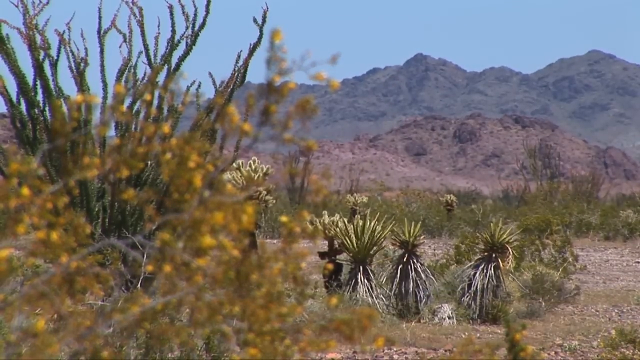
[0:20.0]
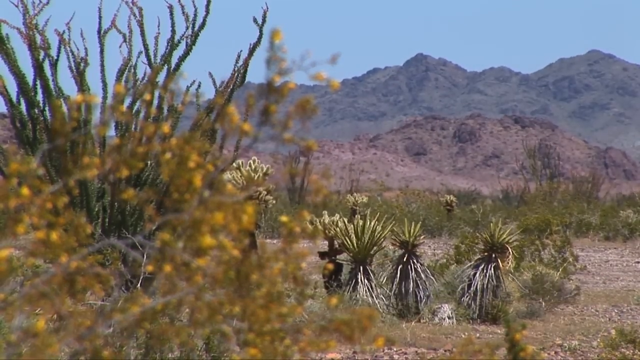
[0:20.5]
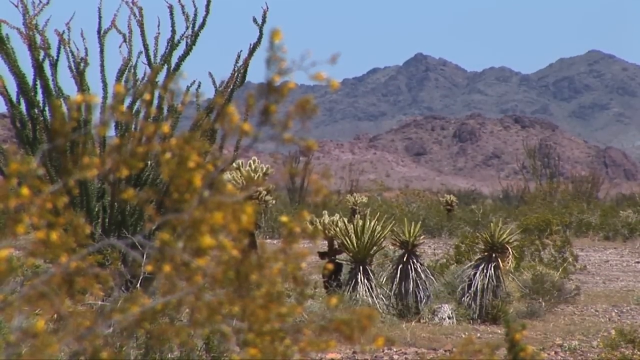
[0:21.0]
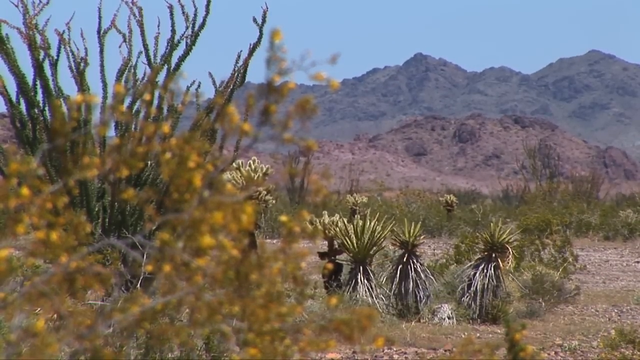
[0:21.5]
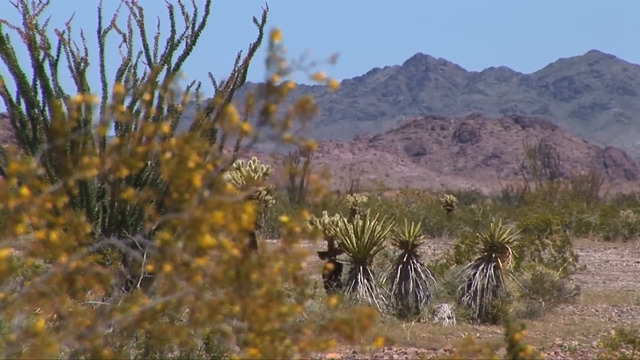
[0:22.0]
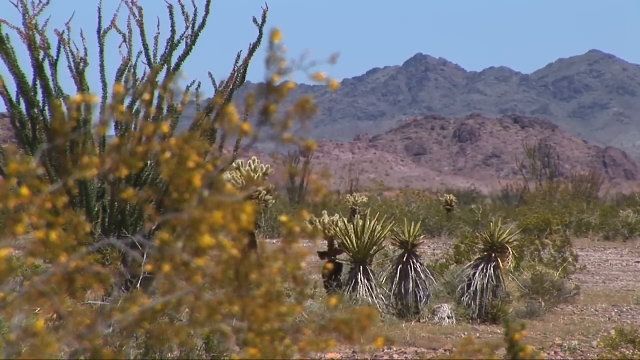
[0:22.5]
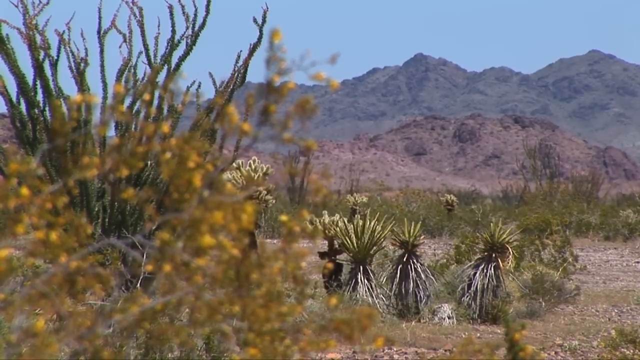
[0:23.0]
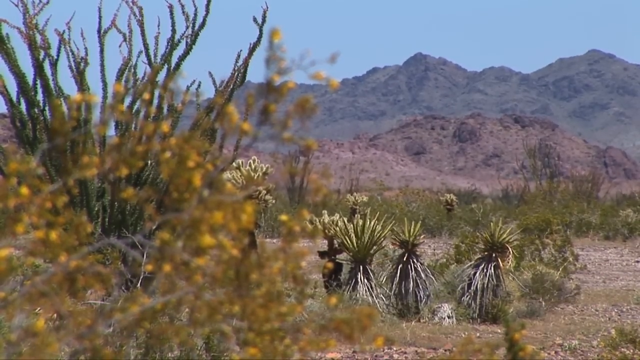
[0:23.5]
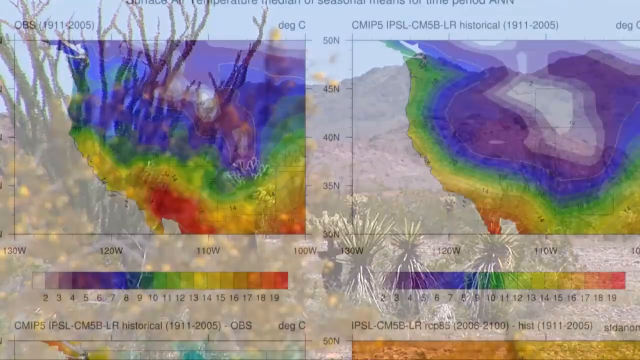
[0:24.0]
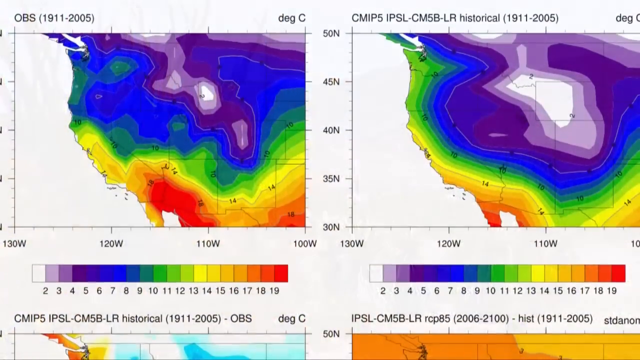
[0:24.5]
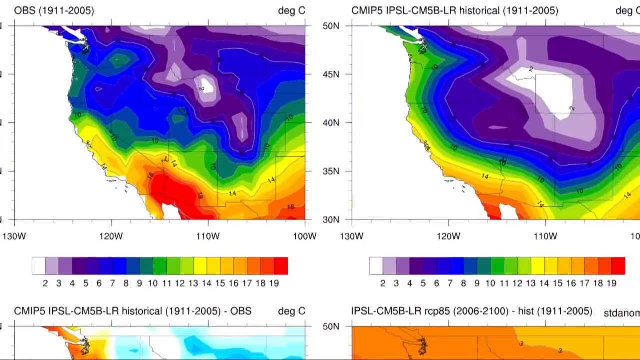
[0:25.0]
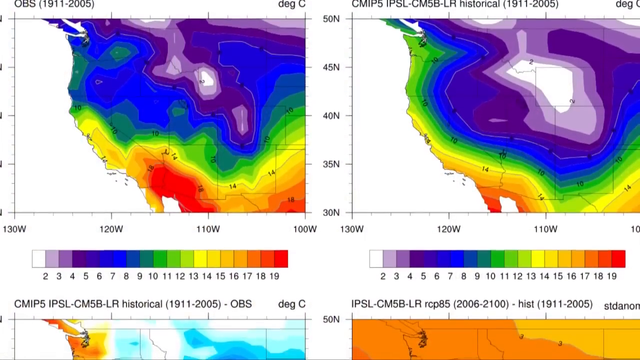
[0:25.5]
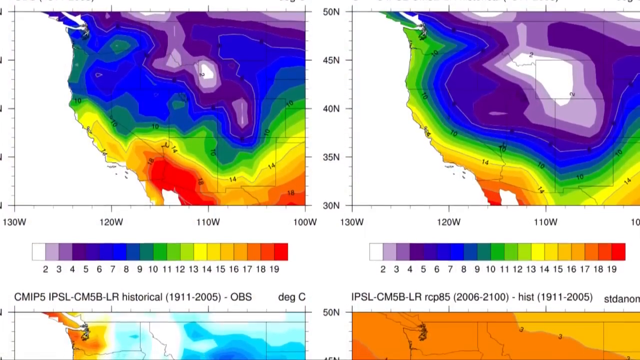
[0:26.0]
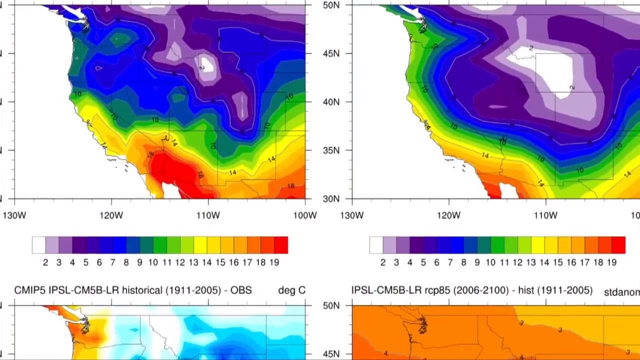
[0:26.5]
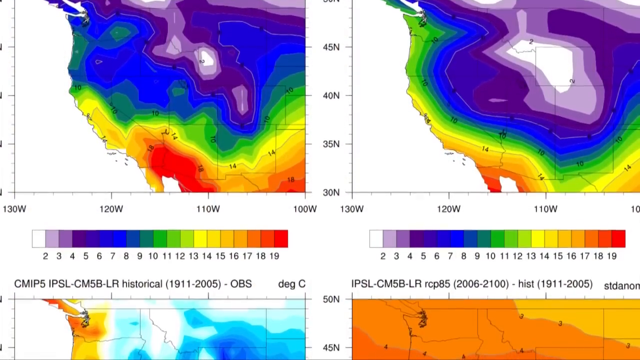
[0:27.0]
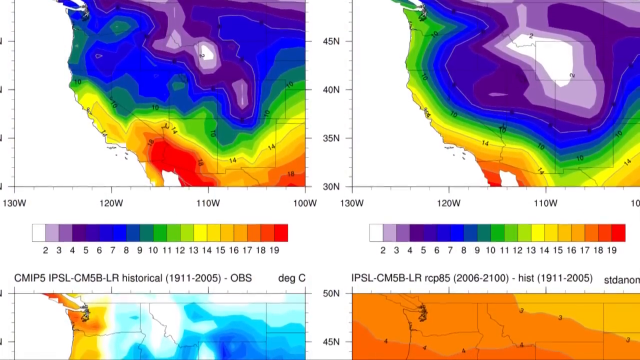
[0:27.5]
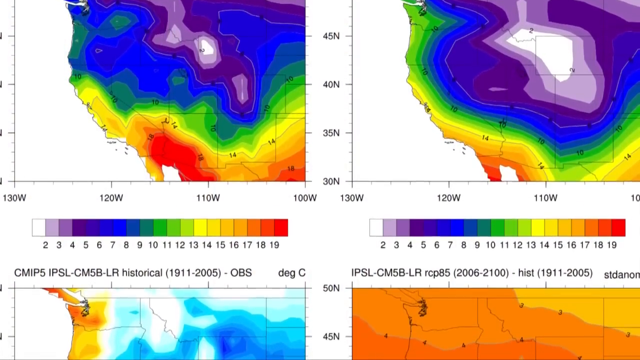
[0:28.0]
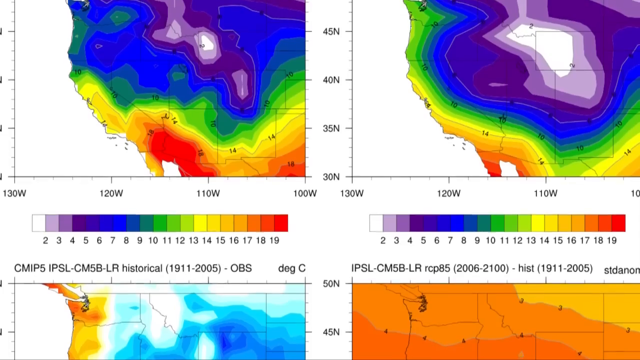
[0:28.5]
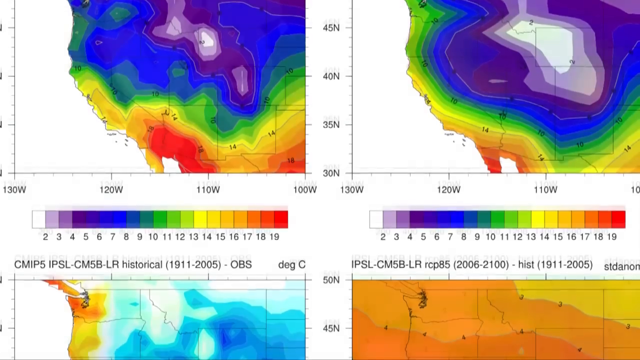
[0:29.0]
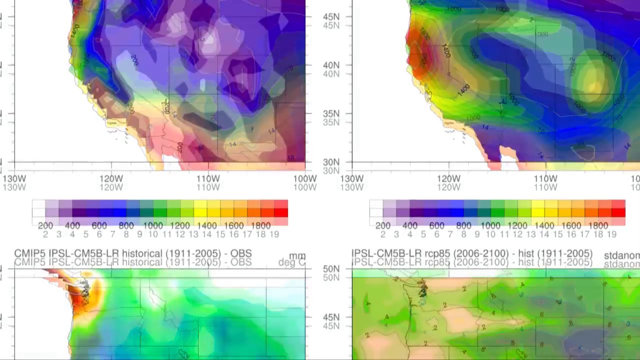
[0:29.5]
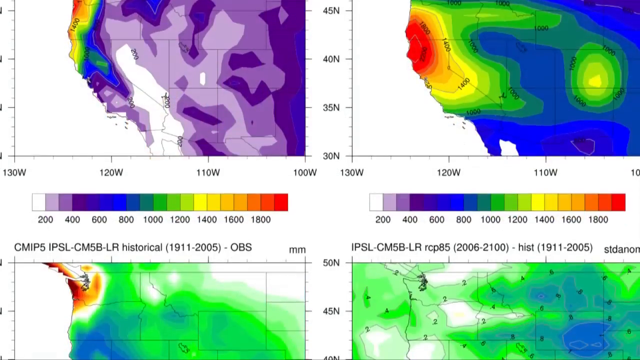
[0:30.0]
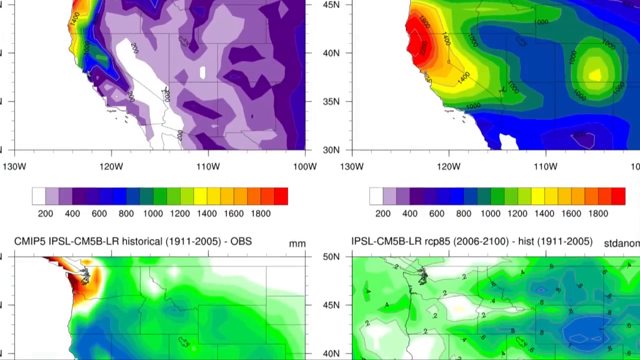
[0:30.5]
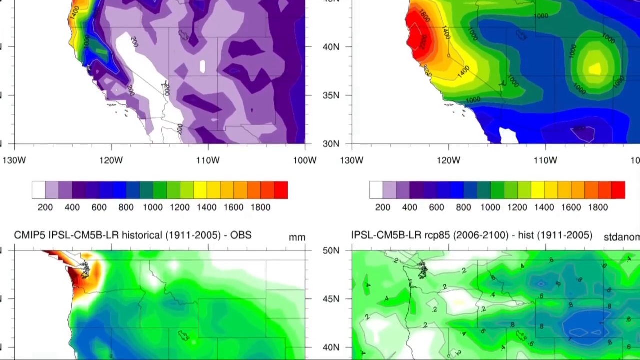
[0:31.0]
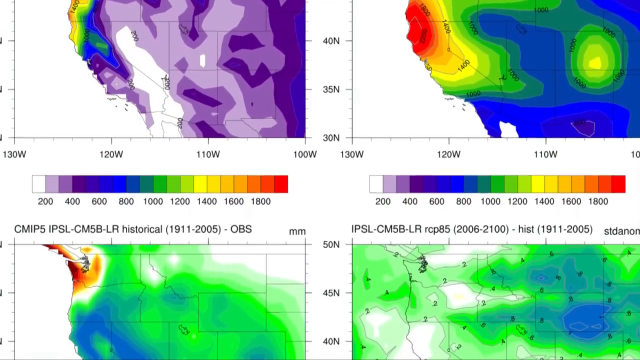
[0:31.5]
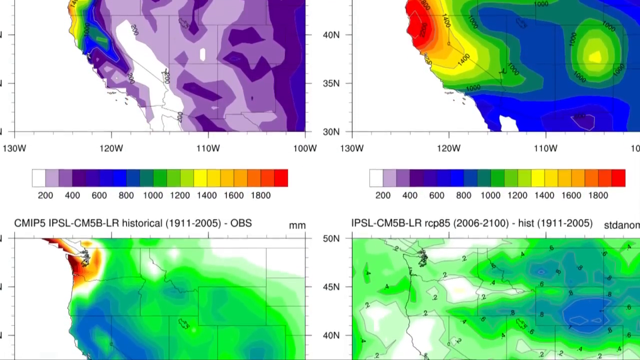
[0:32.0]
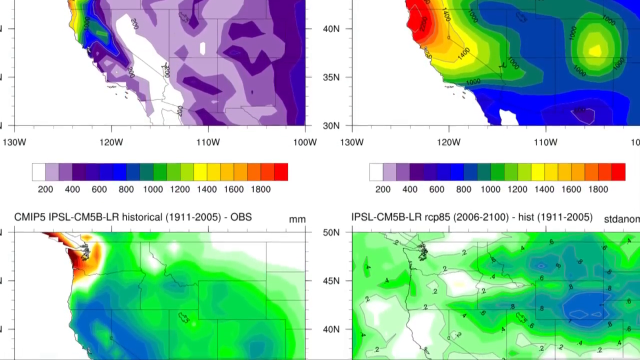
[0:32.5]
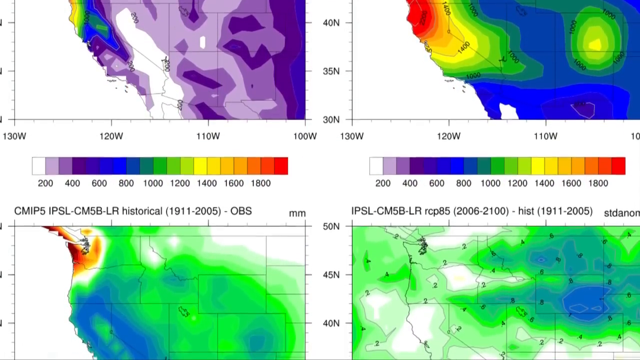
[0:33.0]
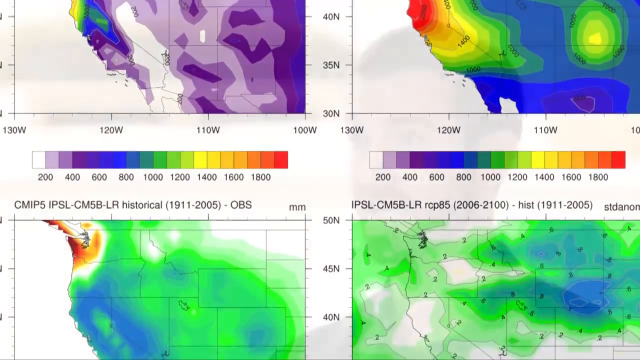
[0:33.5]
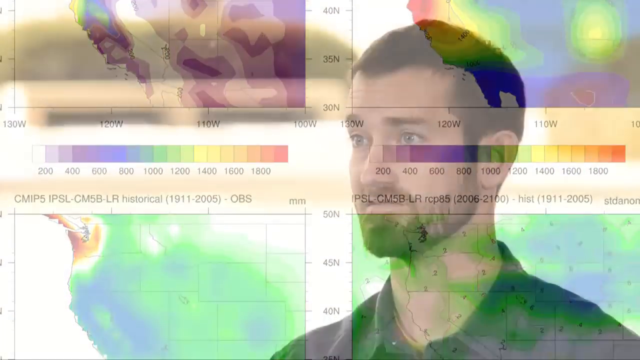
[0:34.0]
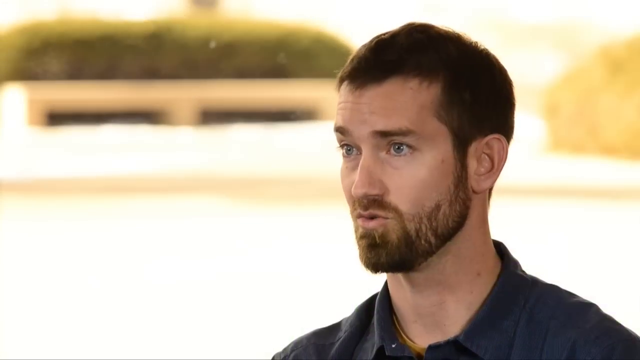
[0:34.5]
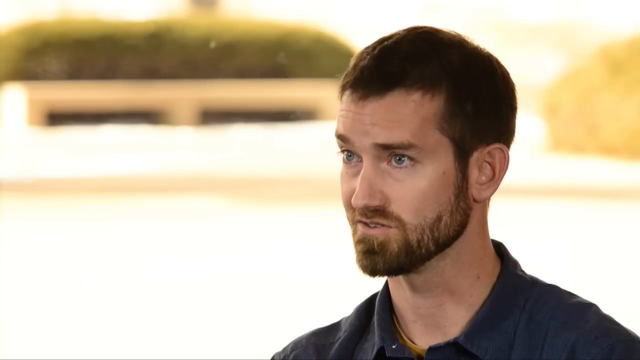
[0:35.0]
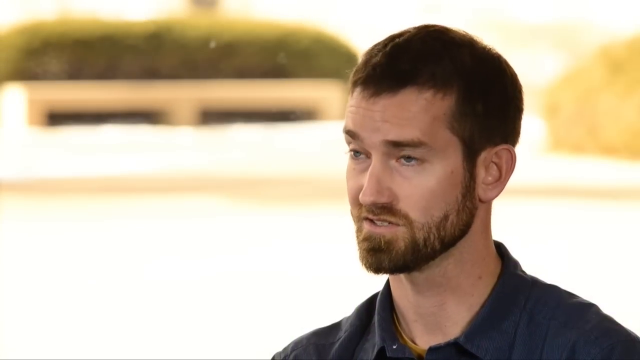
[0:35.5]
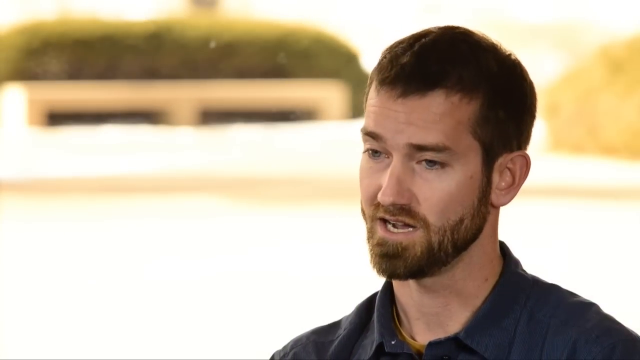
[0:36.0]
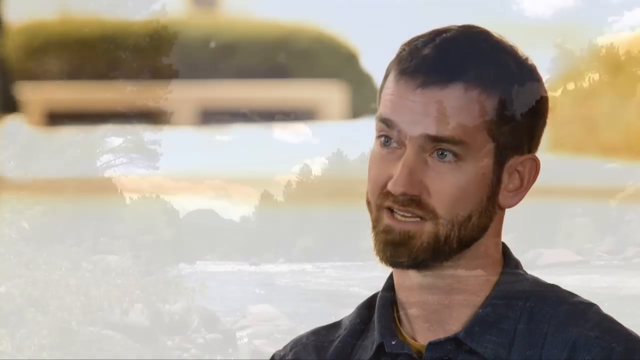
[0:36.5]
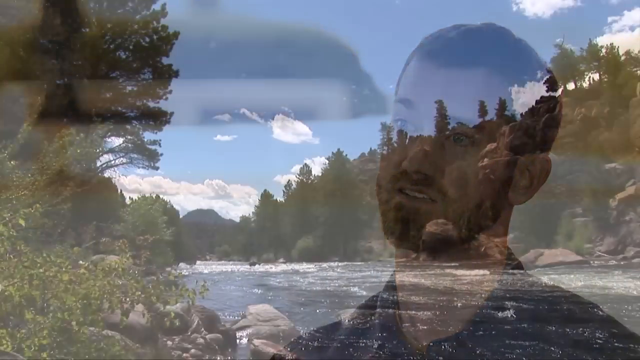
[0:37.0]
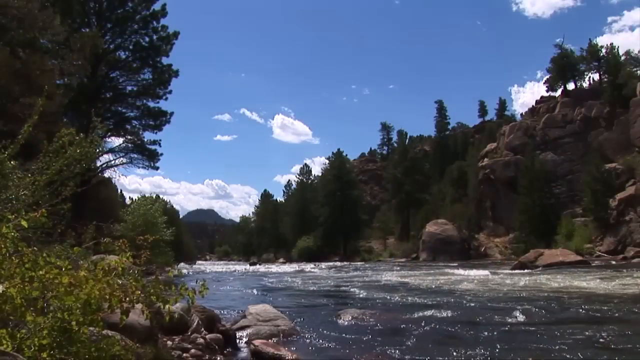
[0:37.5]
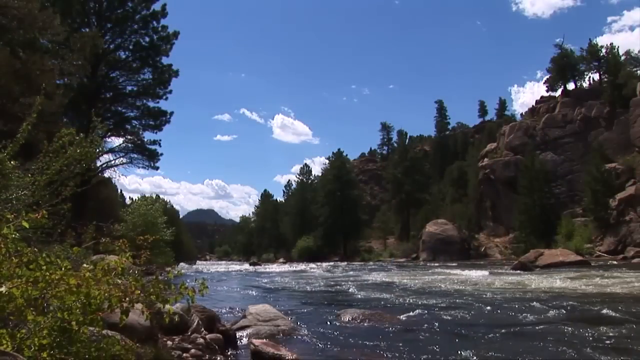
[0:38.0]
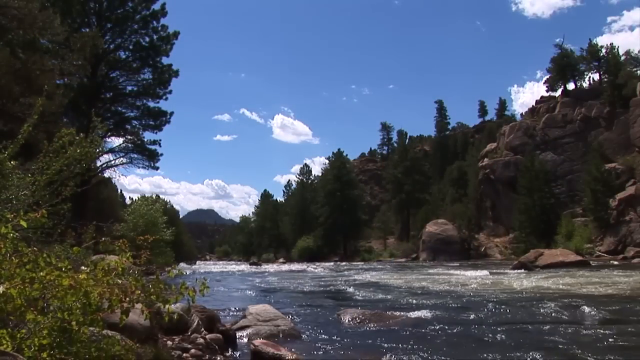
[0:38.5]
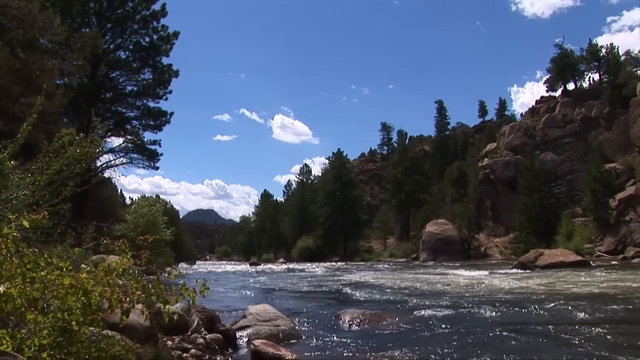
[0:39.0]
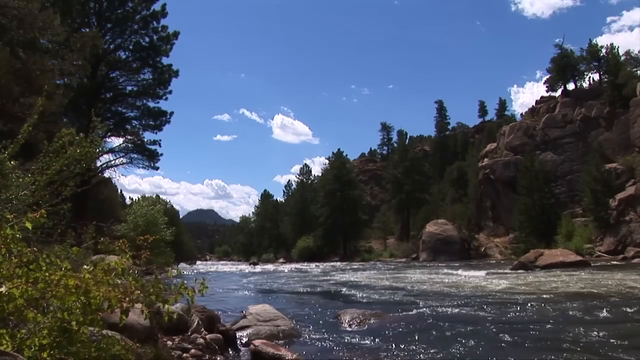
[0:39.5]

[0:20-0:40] A very dry desert scene shows very rocky mountains in the background with no trees or green bushes on them. In the foreground there is a spiky plant with some yellow flowers and some green cactus-looking plants at the front, and there is a lot of sand and rocks on the ground. The video switches to a graphic that seems to be about rainfall amounts around the world, with rainbow-coloured stripes and areas of blue, green, some yellow and some orange, ranging from 130 west to 100 west. There is a graph with a left and right axis, and the screen pans down to two more square graphs. The man is shown talking to the video again, and then a countryside scene appears with a large river running down the middle, rocky cliffs on either side, and lots of trees and bushes growing along the sides.